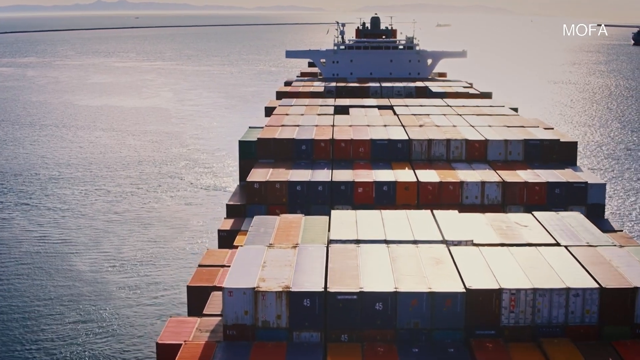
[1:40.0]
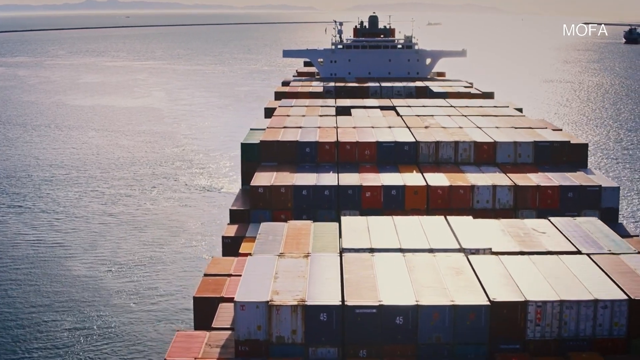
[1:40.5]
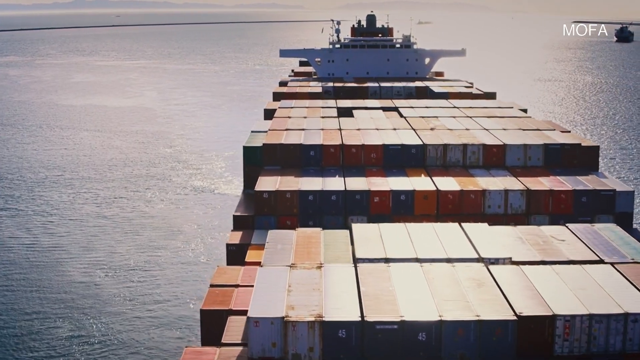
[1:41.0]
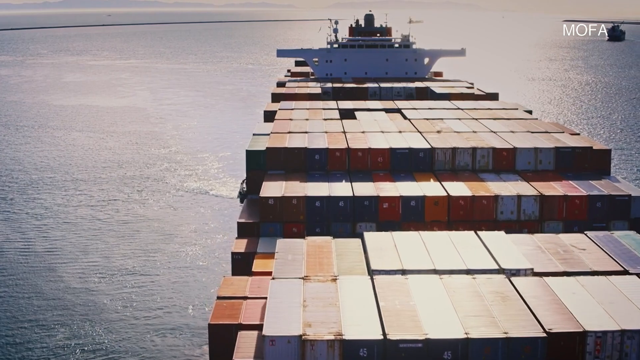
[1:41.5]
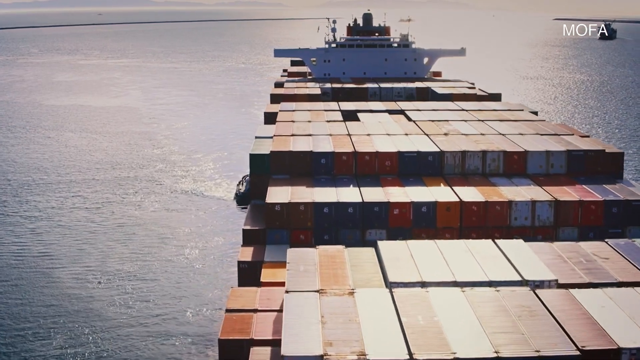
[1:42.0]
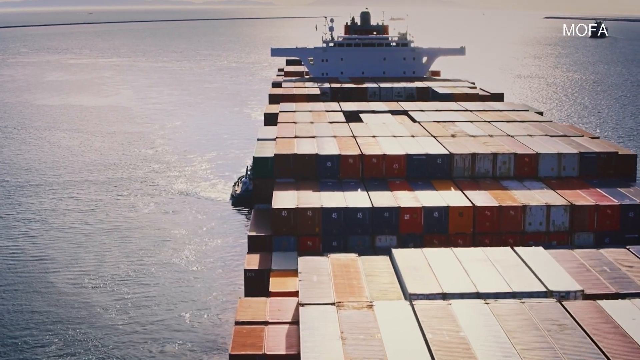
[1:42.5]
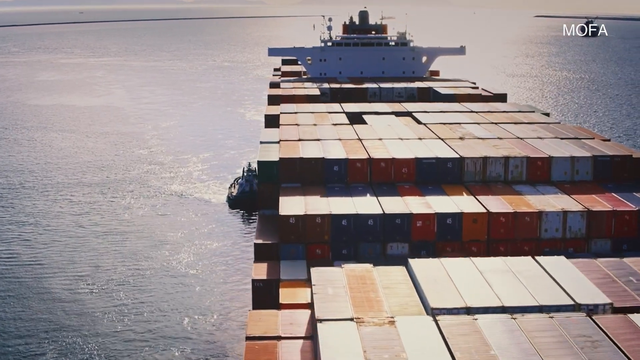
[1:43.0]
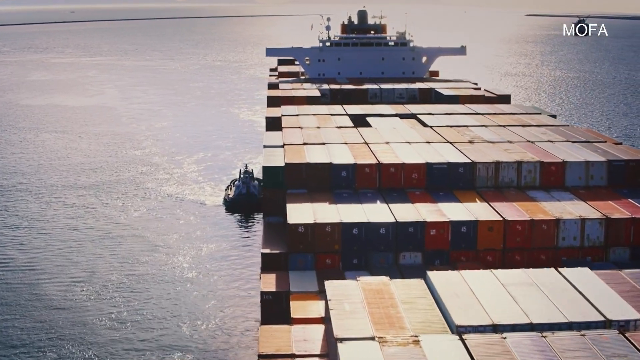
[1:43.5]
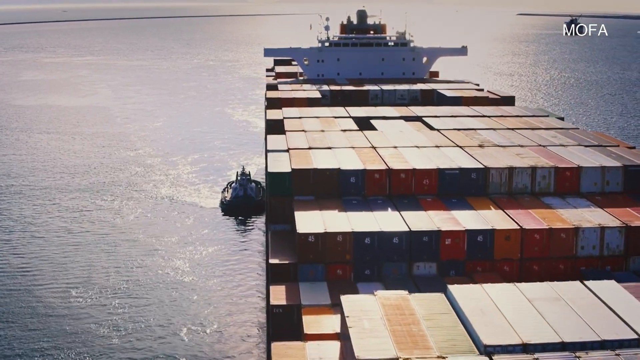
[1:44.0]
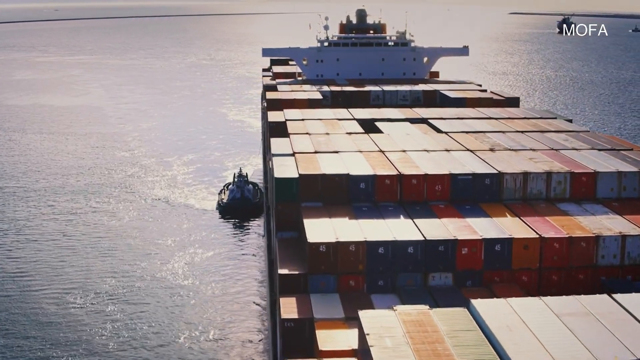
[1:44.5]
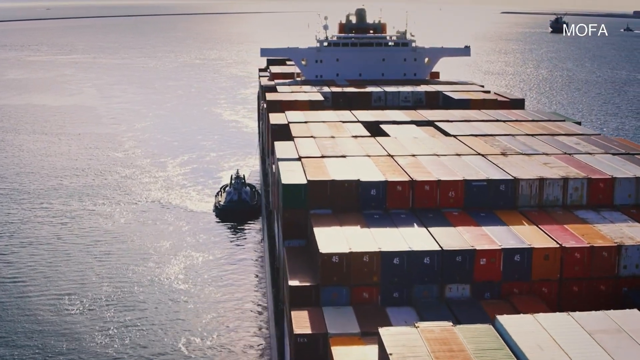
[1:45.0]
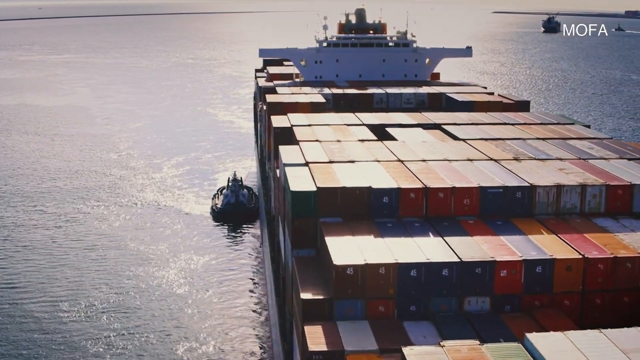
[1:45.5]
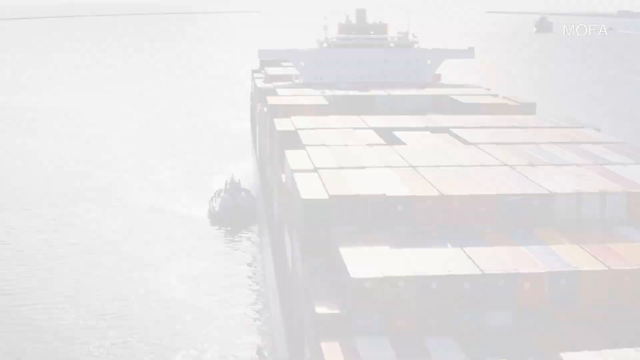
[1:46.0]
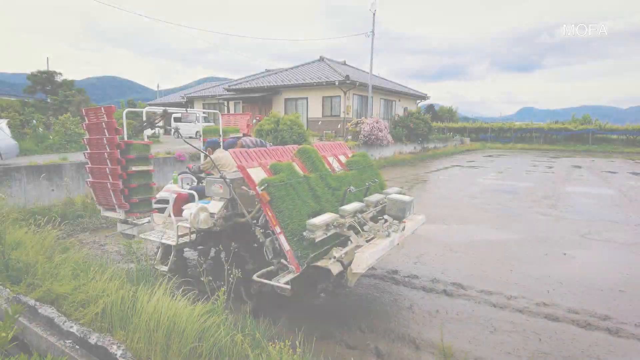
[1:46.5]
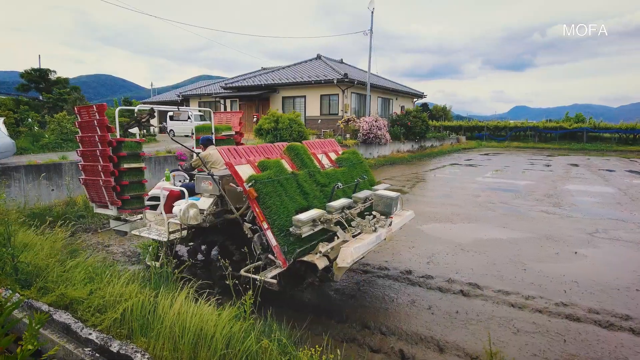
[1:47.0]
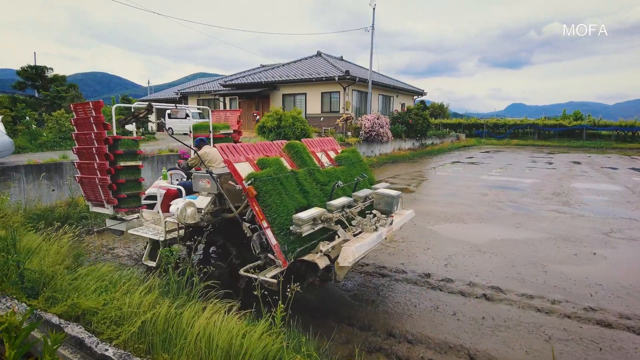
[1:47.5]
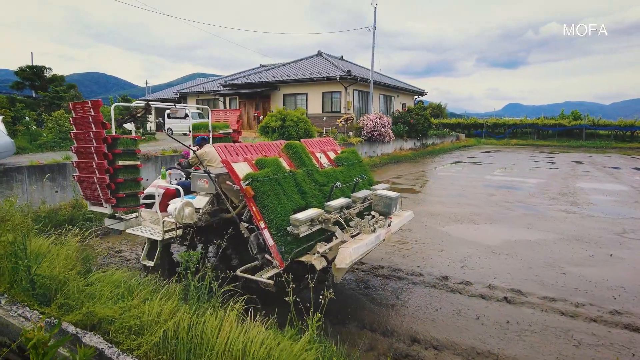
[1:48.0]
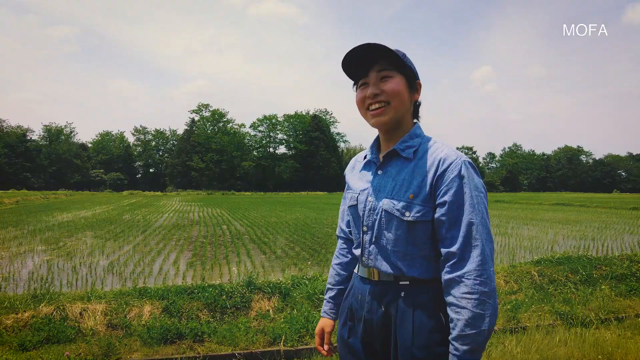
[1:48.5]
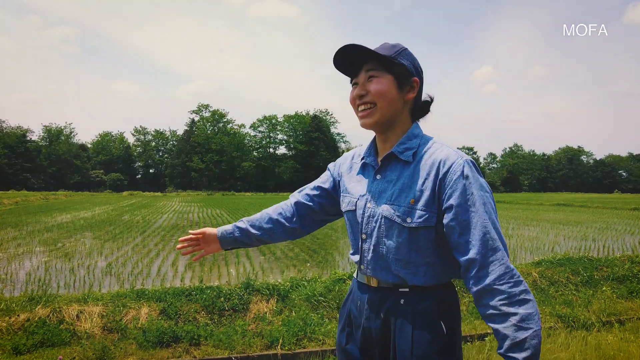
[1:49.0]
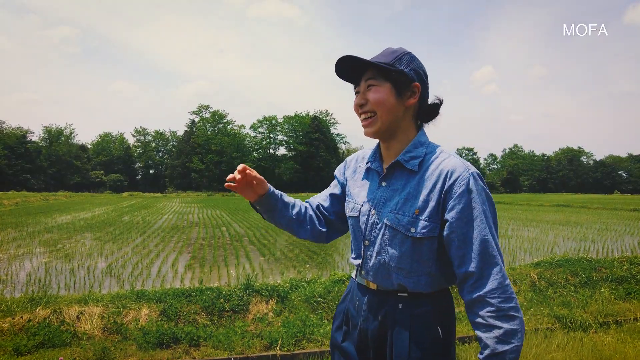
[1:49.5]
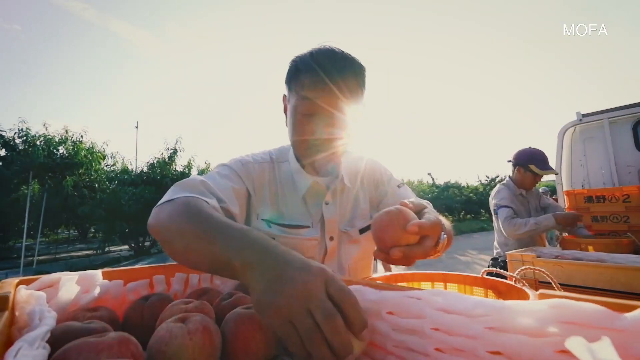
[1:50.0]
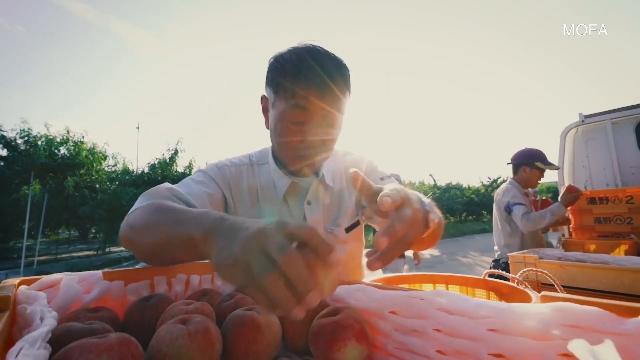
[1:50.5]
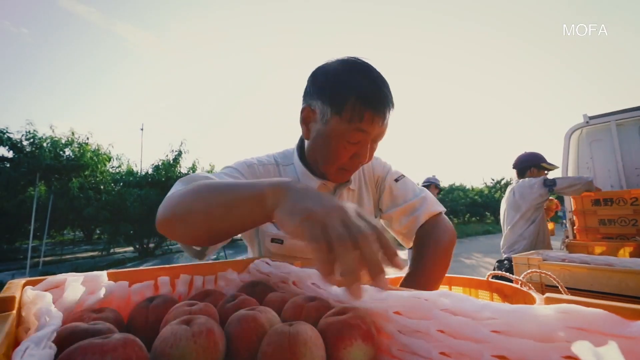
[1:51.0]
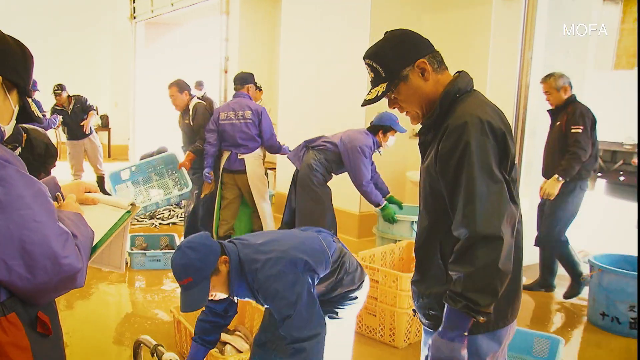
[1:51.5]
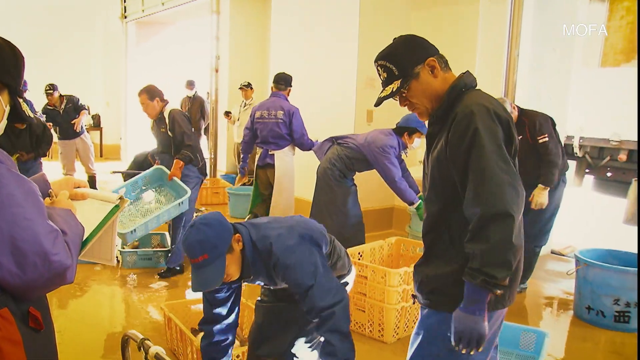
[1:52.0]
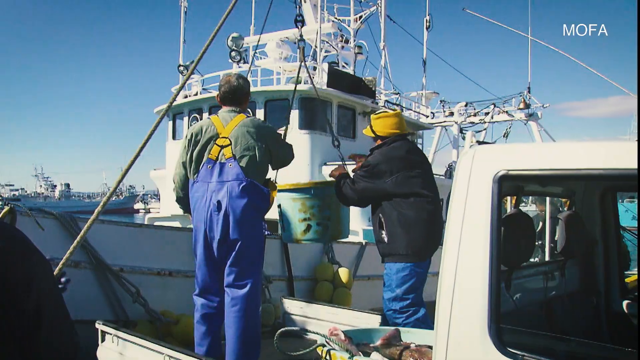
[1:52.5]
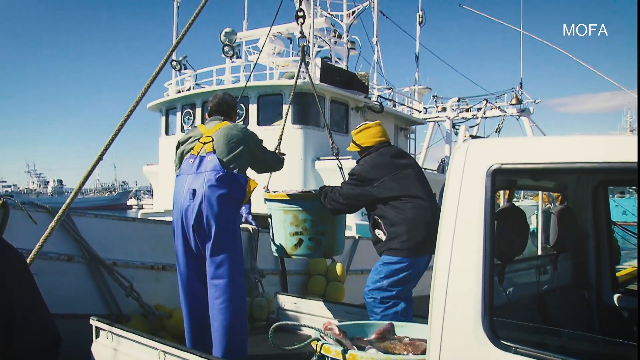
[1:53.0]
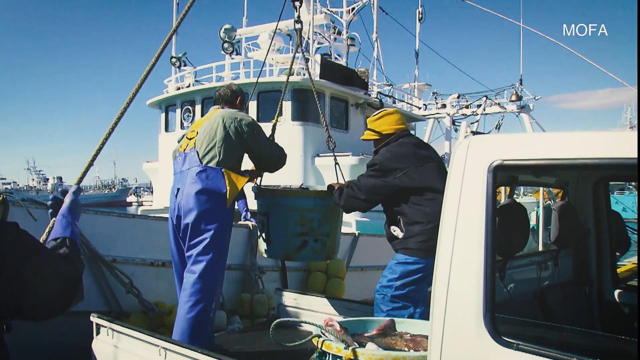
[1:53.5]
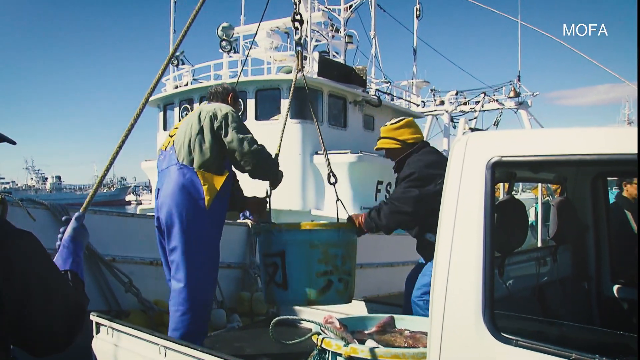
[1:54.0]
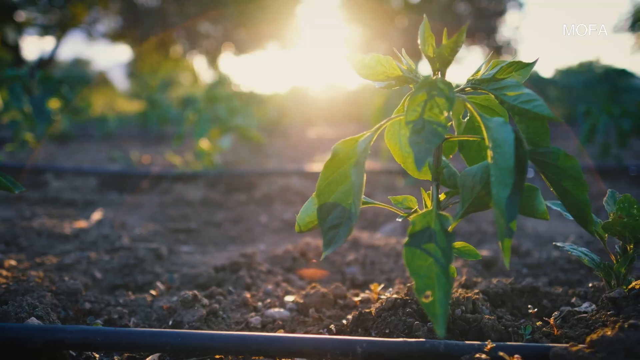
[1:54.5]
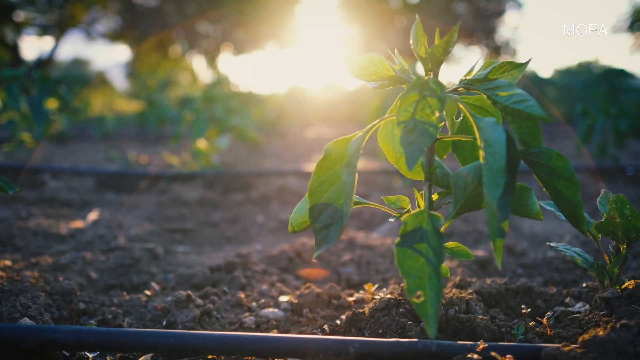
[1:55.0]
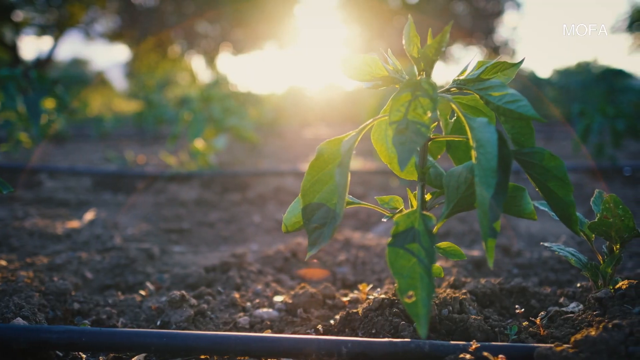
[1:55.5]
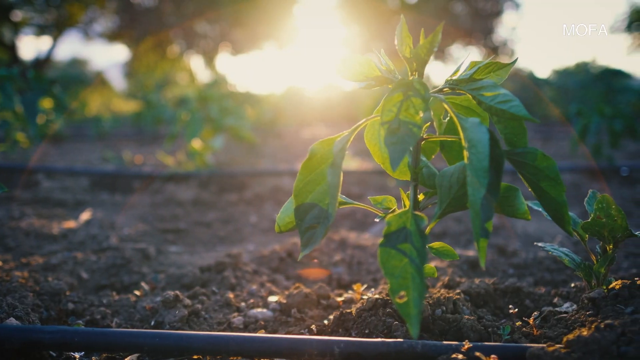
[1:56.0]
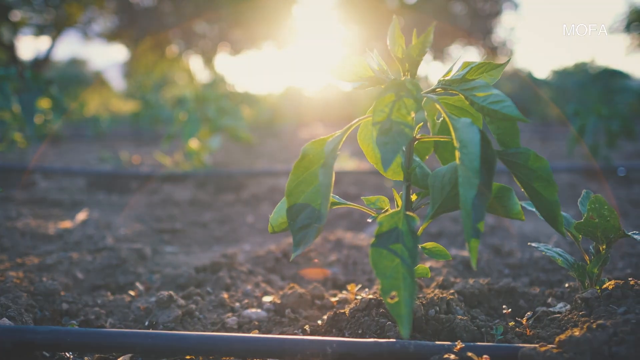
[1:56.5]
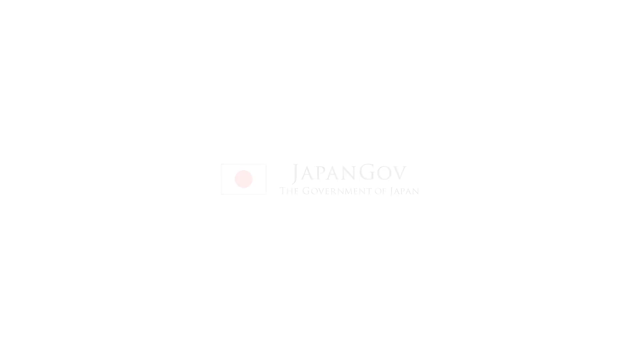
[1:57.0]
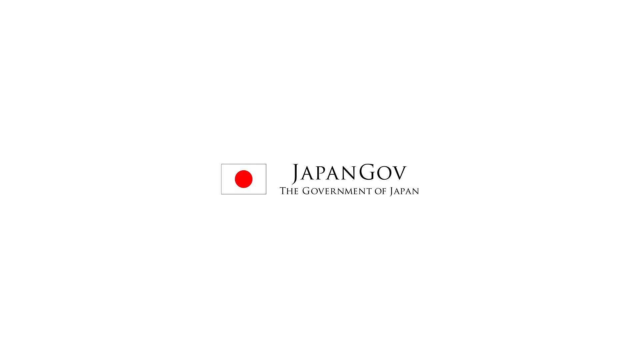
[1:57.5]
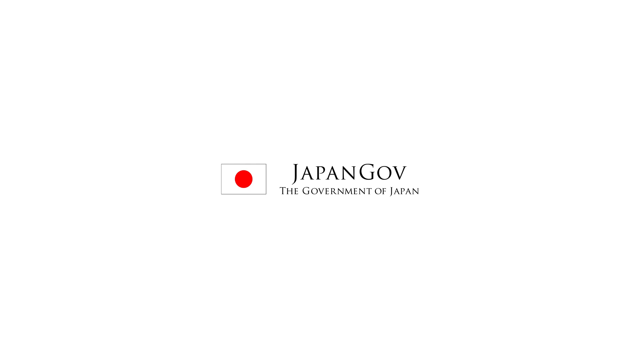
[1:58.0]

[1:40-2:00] A large cargo ship filled with many different containers appears, showing how big the boat is. Someone in the fields cuts down various crops. A man or woman dressed in blue grins while showing their field. A group of people package things in baskets, and then the view pans to someone in a factory handling them. People on a boat lower down a basket with fish in it. Lastly, plants grow from soil in the ground. At the very end, Japan government is shown.